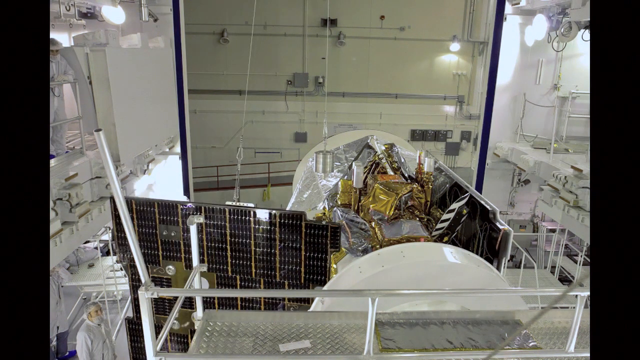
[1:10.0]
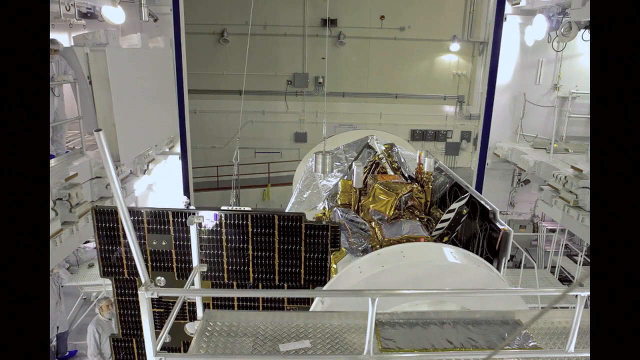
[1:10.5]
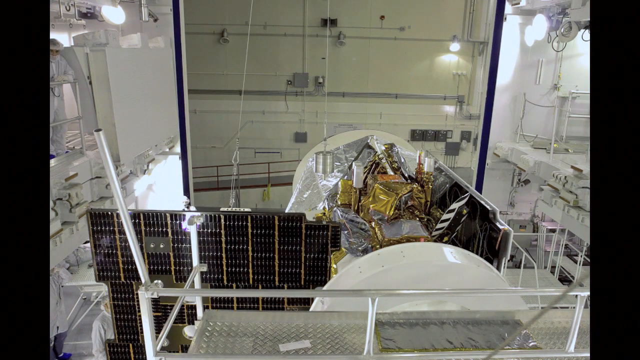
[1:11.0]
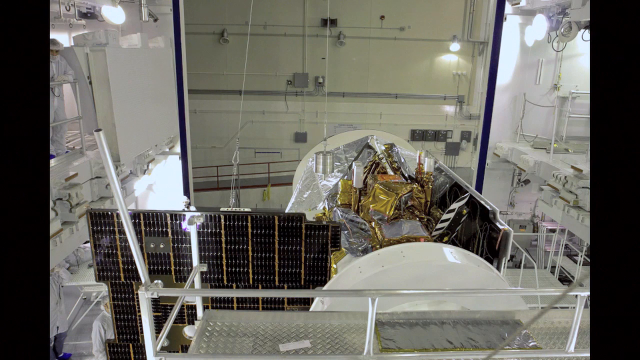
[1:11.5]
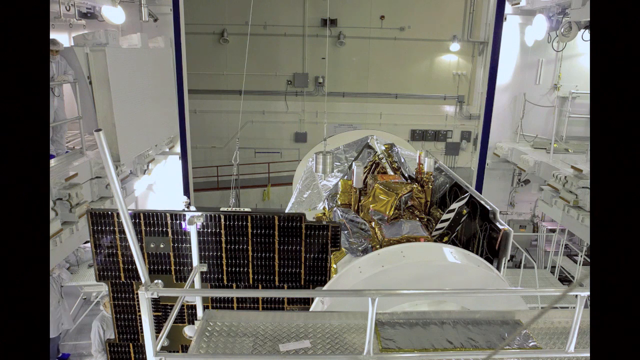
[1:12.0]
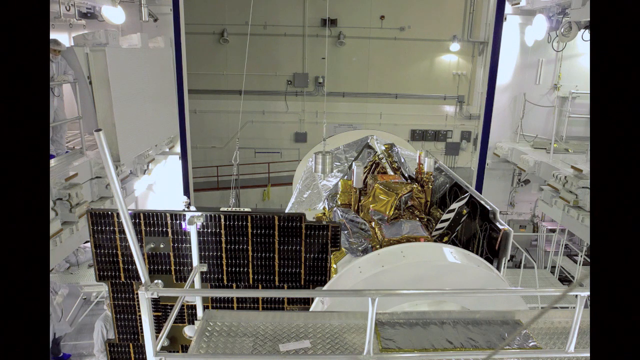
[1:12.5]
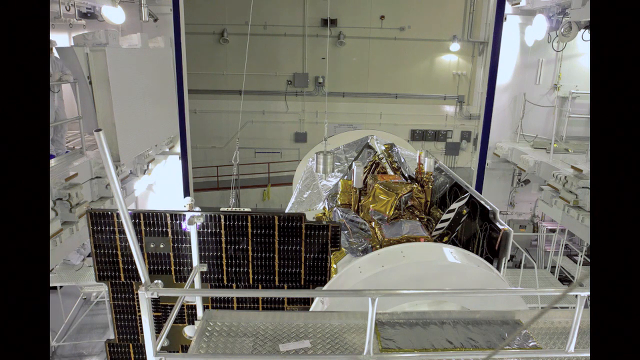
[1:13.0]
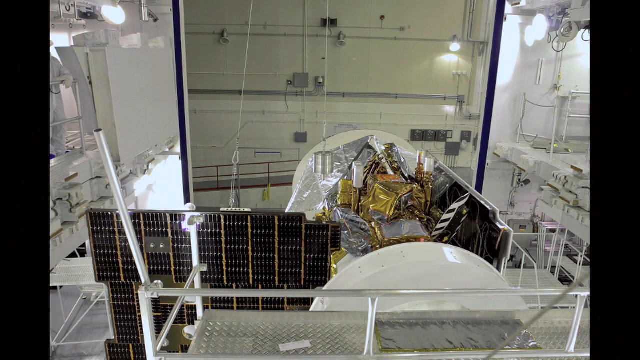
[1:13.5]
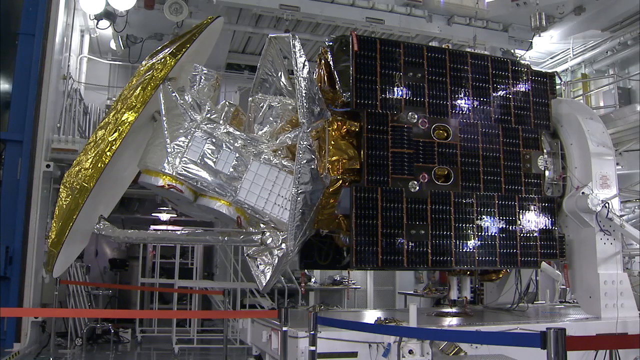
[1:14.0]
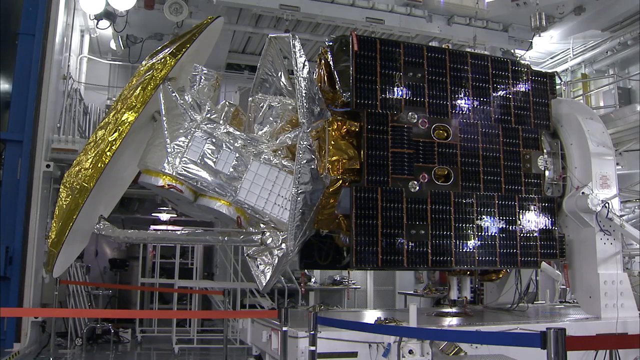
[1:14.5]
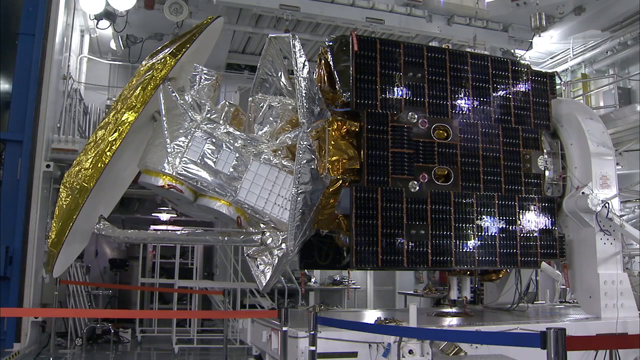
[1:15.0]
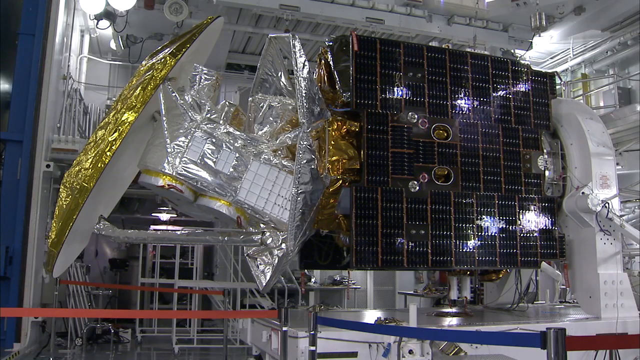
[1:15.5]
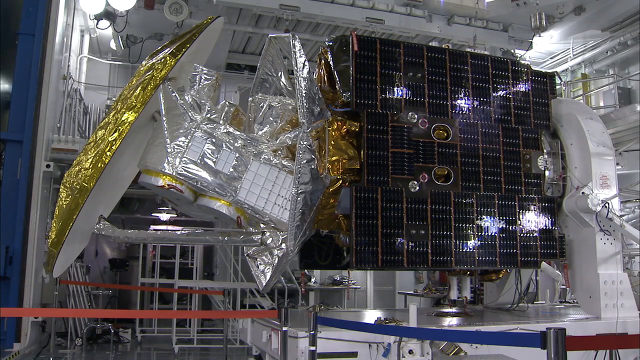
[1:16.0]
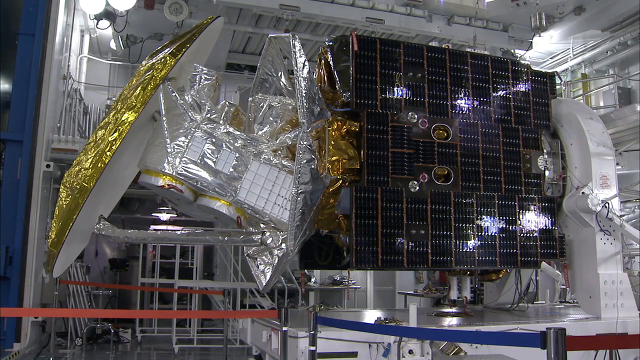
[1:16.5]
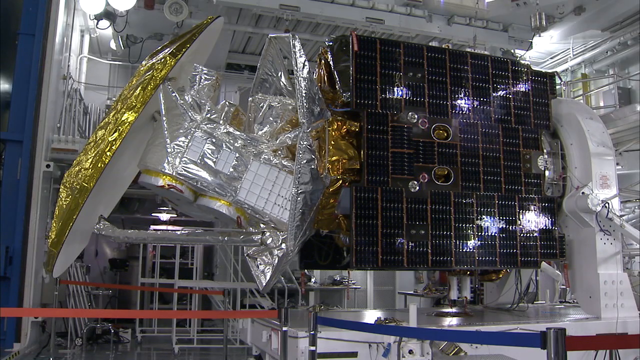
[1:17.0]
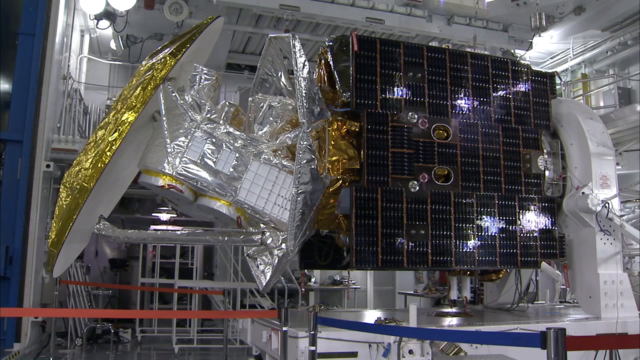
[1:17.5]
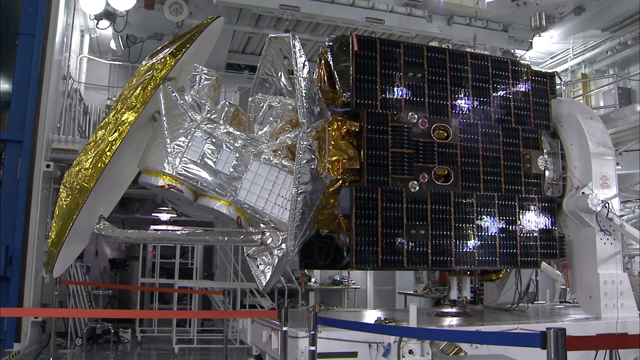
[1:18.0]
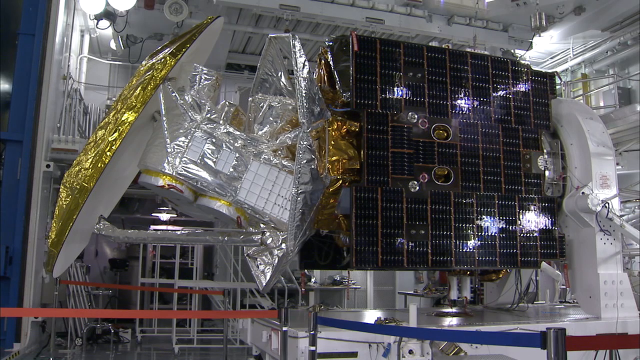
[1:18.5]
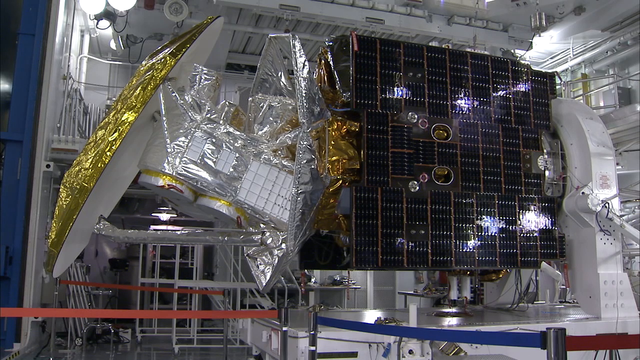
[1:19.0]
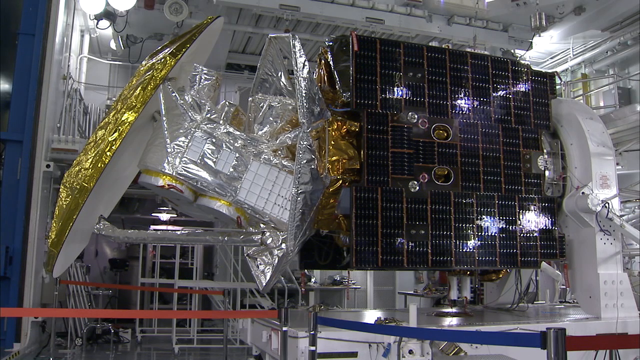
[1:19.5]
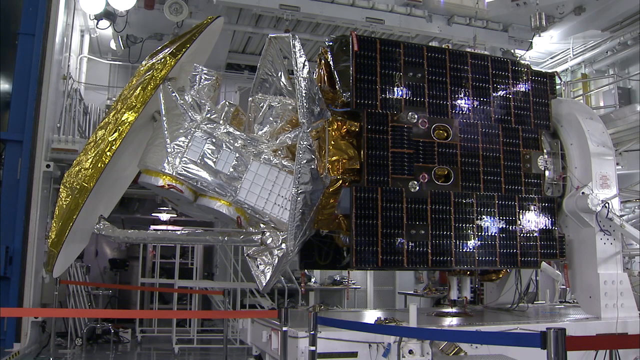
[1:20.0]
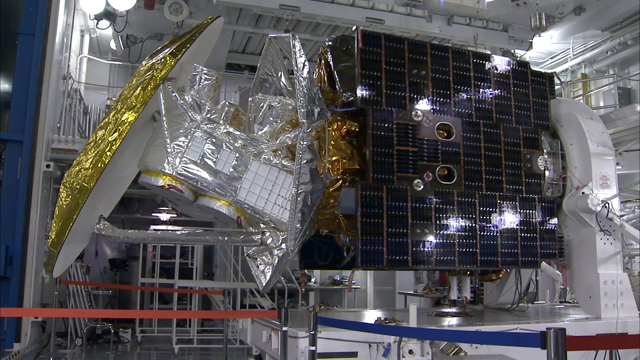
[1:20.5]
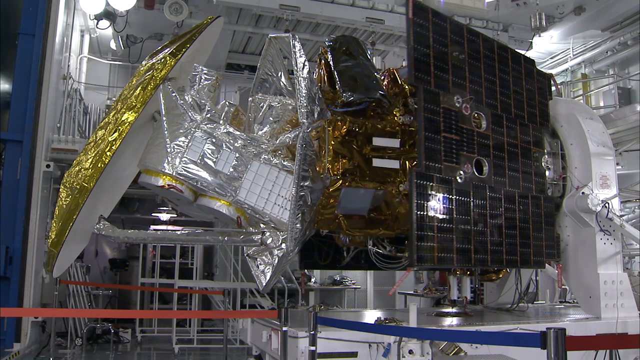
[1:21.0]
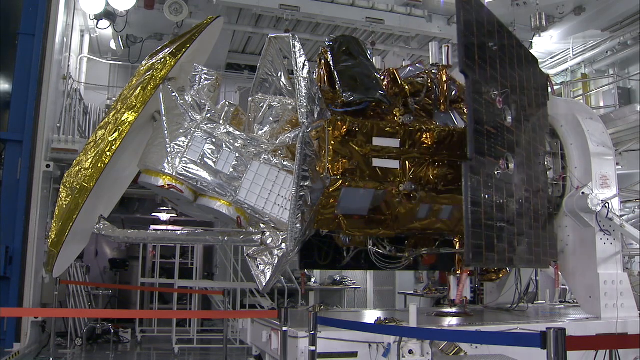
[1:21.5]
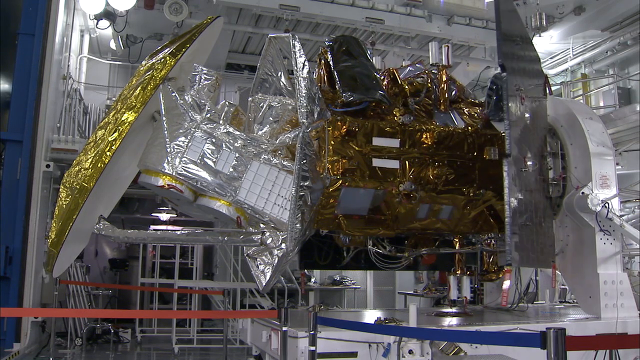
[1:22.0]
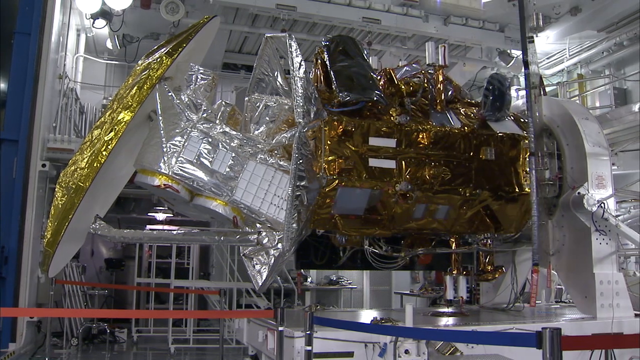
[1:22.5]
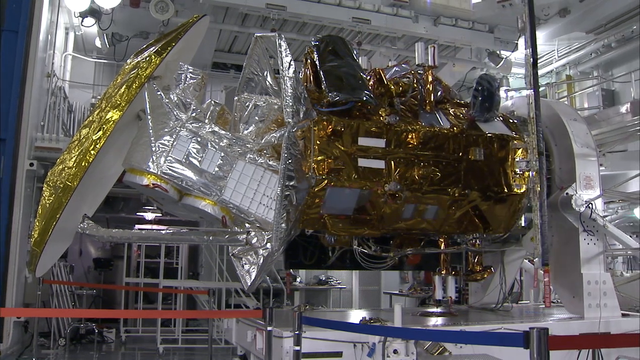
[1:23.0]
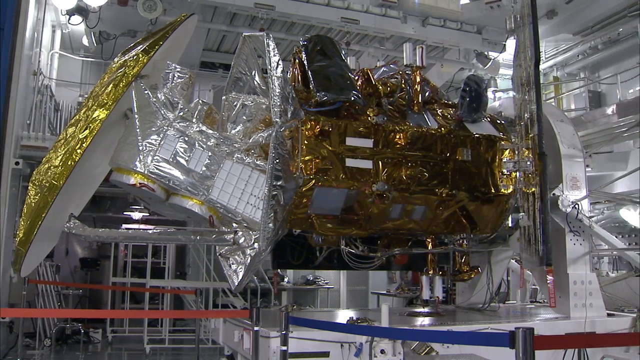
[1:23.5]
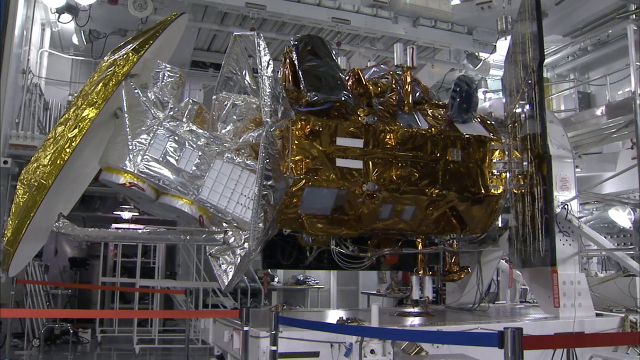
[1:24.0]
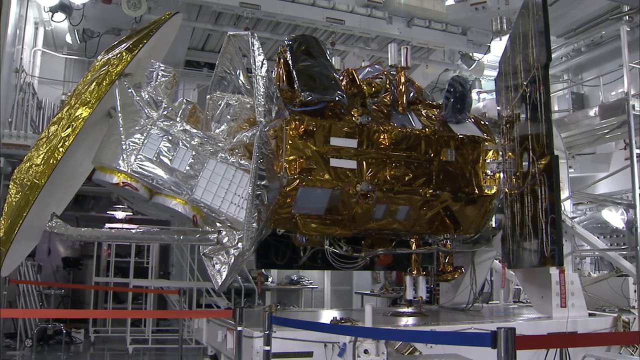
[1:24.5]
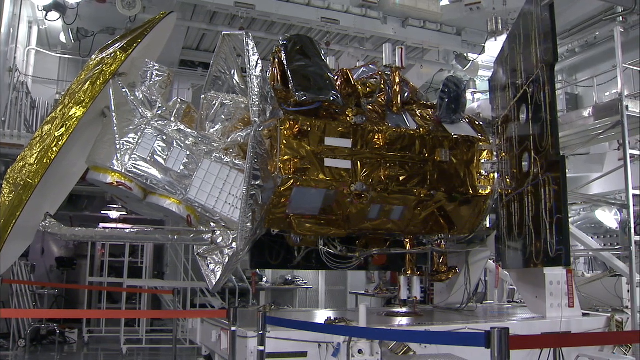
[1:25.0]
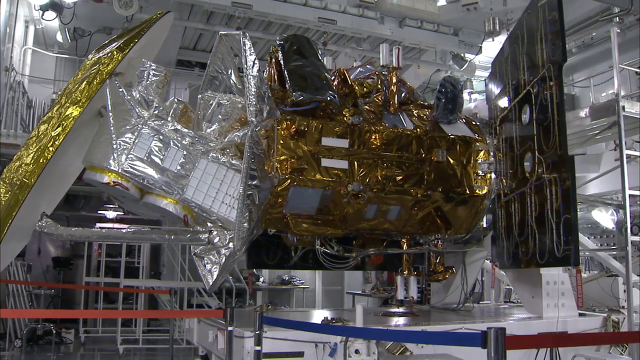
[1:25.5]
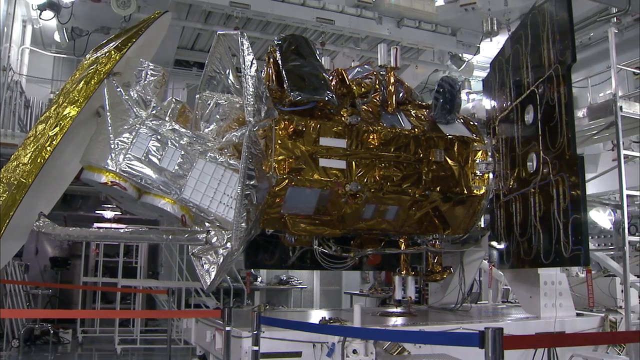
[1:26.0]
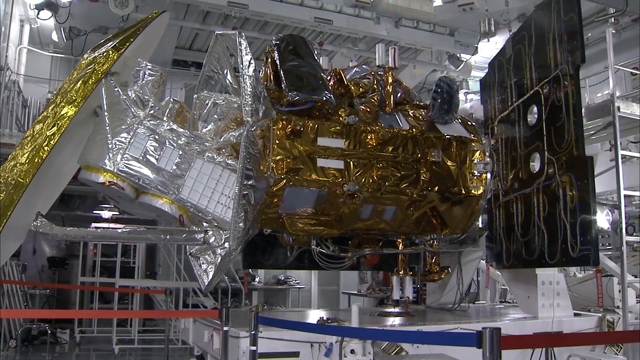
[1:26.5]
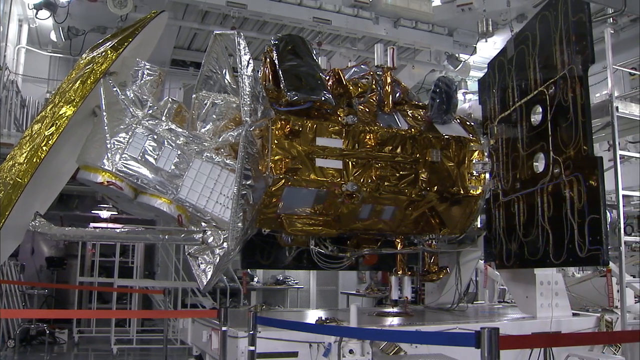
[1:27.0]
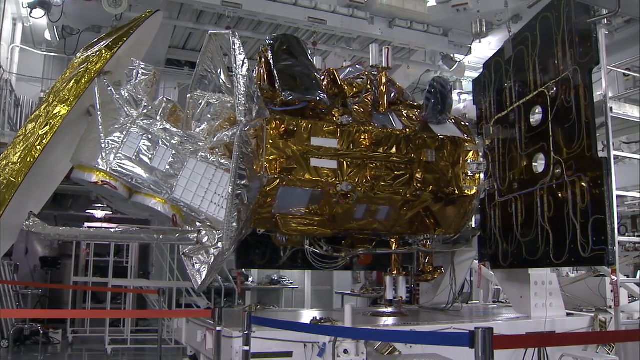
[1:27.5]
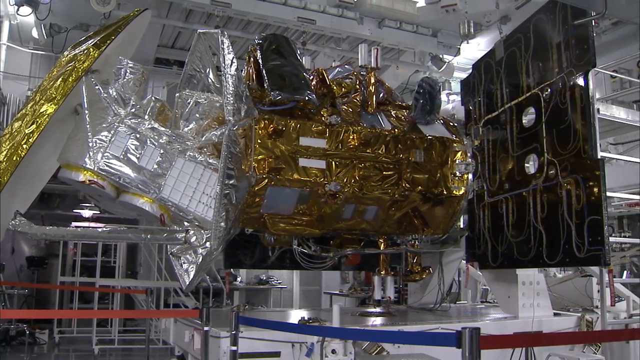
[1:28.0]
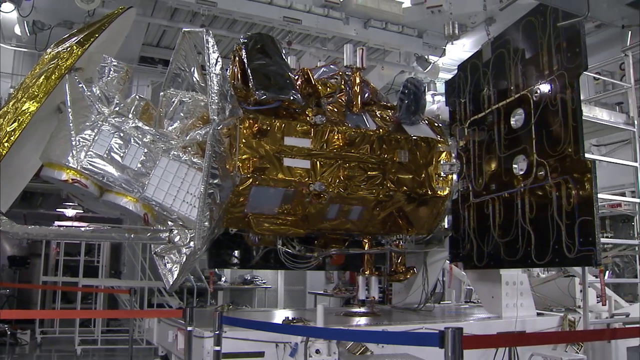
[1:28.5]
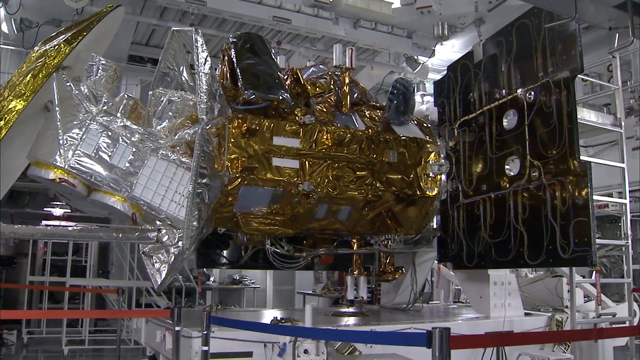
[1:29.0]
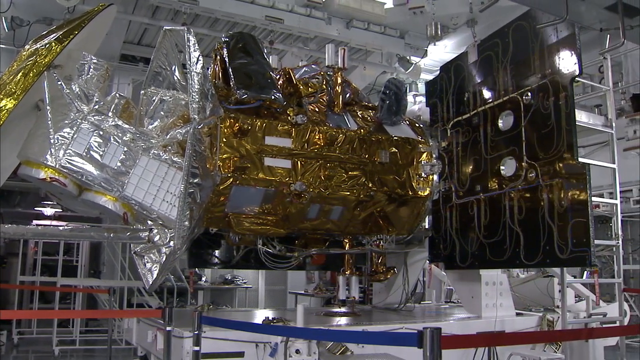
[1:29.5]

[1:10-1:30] Some type of equipment is in an all-white warehouse setting. Some sort of solar panel appears to be on the side and is opening. A different view of the same equipment and solar panel shows light reflecting off the black solar panel as it is turned to open, revealing the inner workings of the equipment underneath, which are mostly gold looking with some white, black and silver pieces. Wires or string of some sort come from above, allowing the solar panel to move out of position so the inner workings of the machinery are visible in the background.